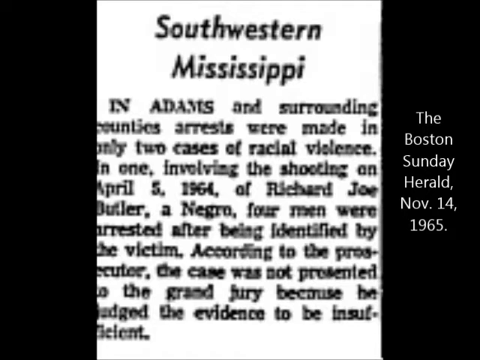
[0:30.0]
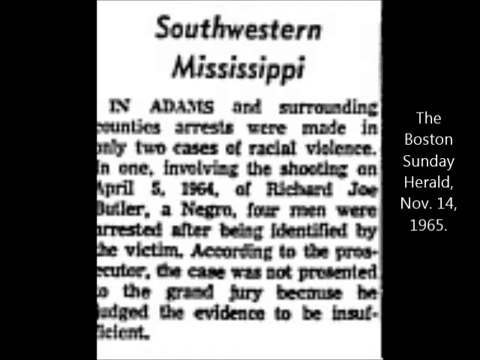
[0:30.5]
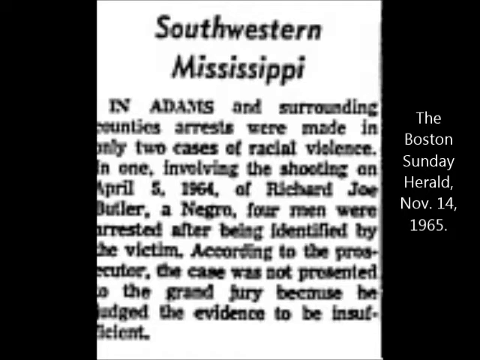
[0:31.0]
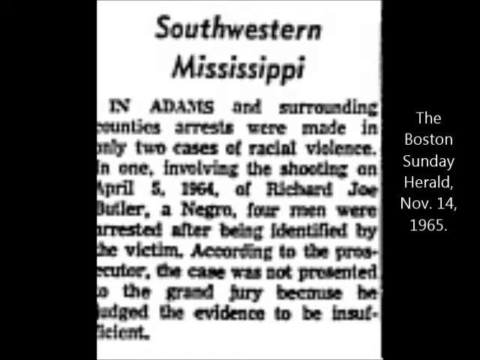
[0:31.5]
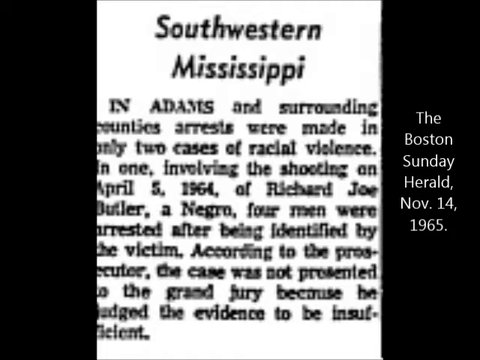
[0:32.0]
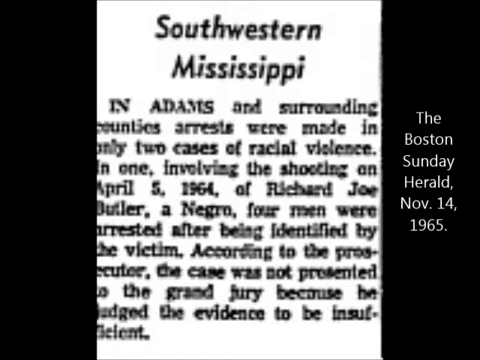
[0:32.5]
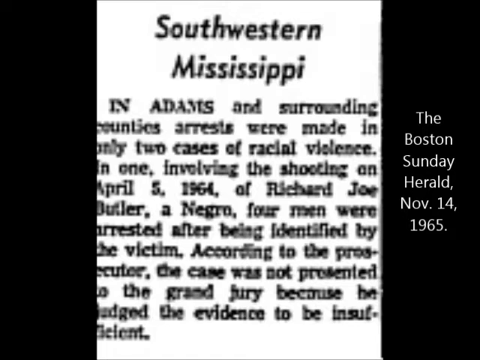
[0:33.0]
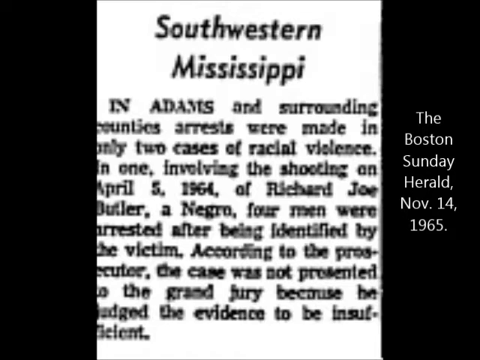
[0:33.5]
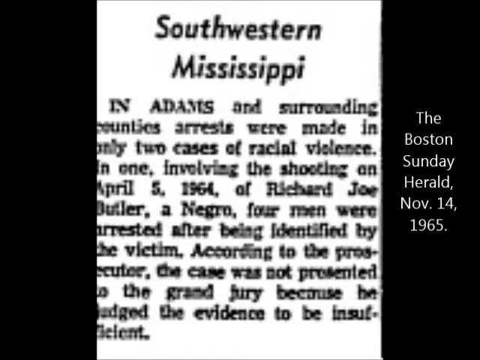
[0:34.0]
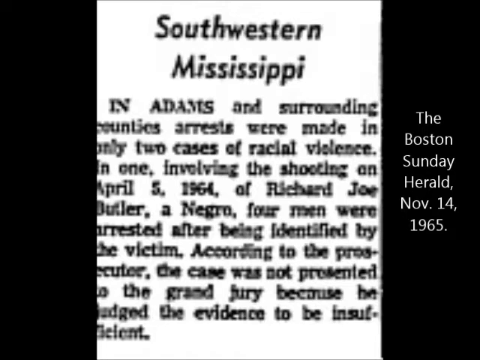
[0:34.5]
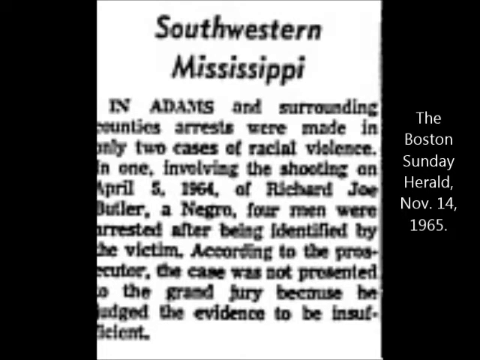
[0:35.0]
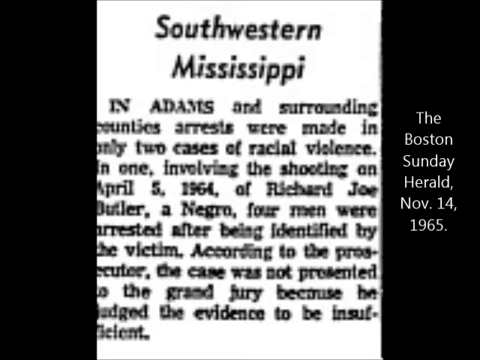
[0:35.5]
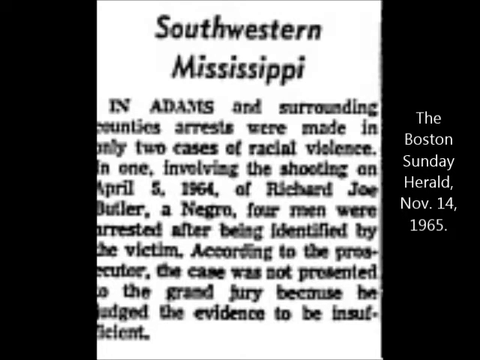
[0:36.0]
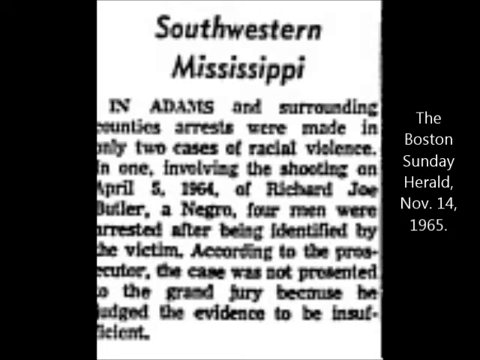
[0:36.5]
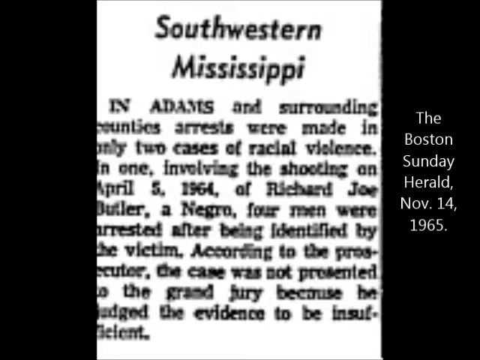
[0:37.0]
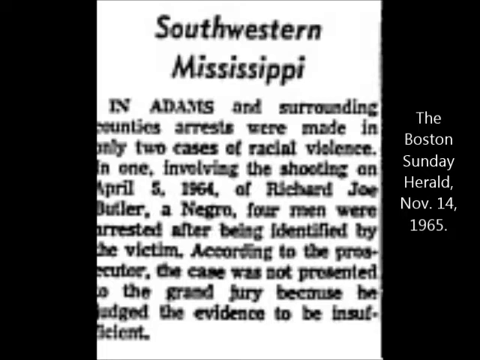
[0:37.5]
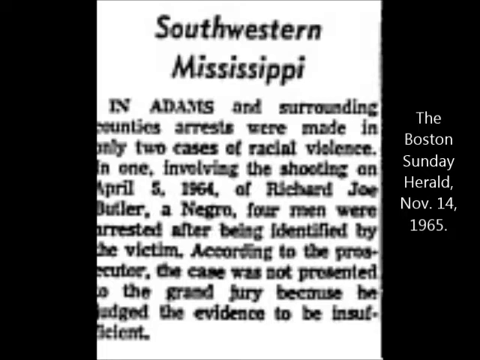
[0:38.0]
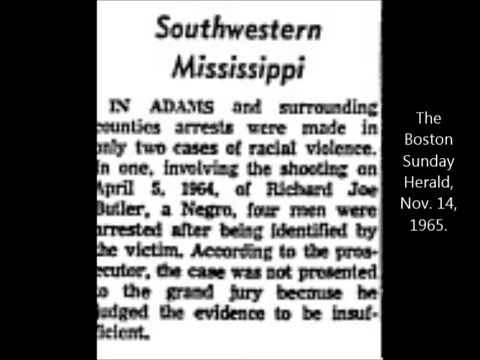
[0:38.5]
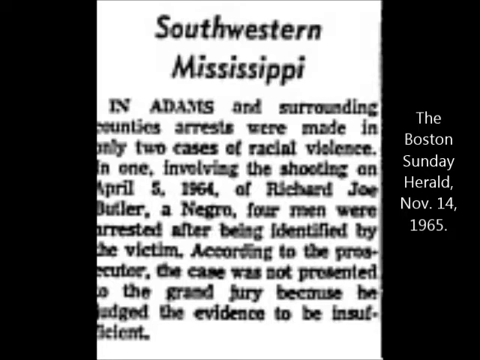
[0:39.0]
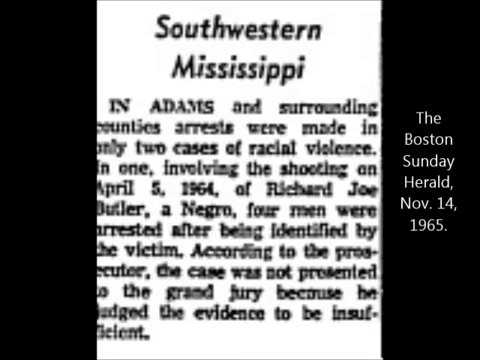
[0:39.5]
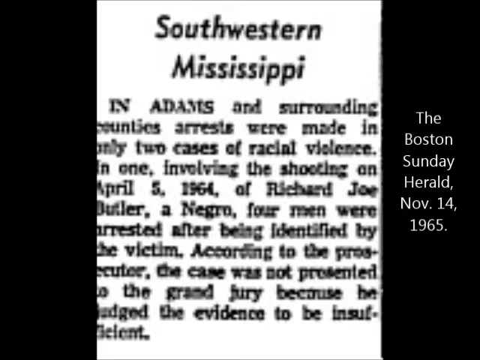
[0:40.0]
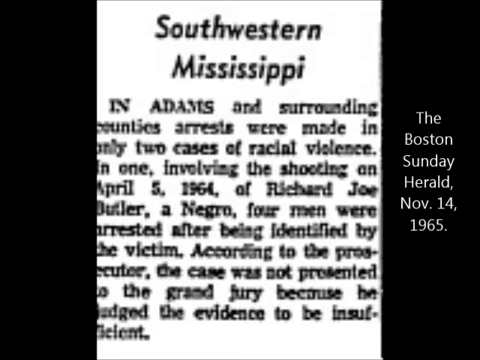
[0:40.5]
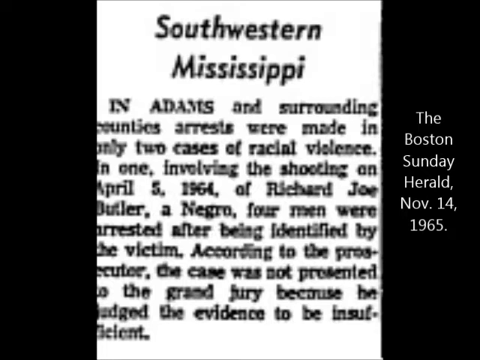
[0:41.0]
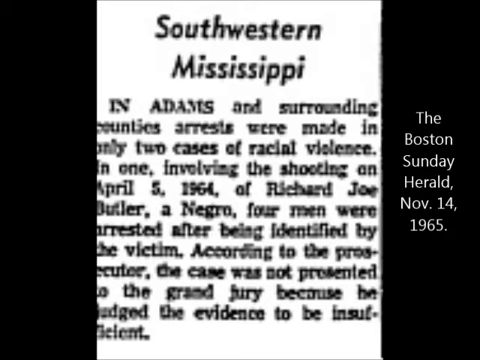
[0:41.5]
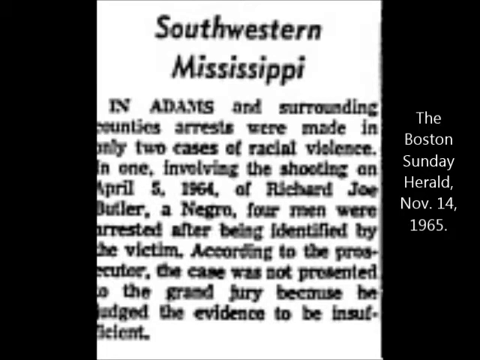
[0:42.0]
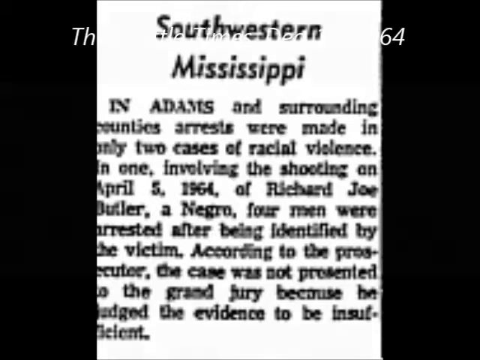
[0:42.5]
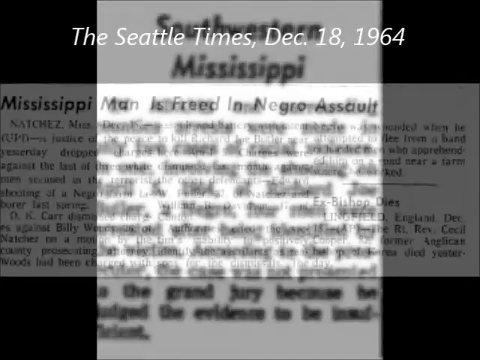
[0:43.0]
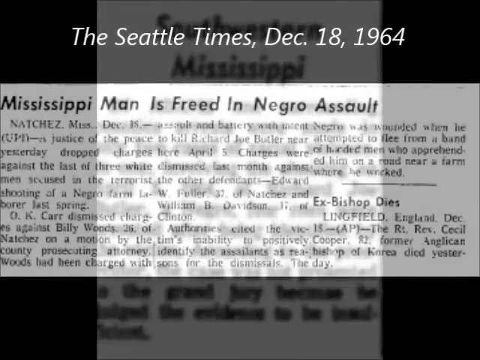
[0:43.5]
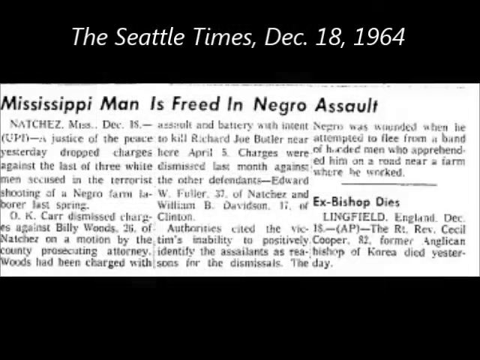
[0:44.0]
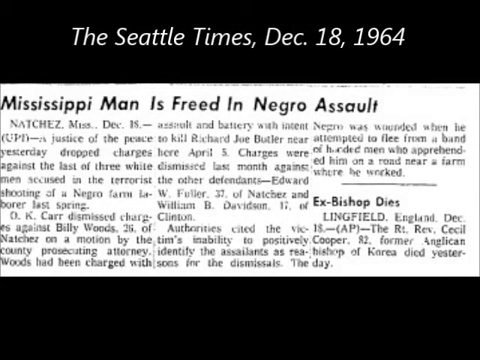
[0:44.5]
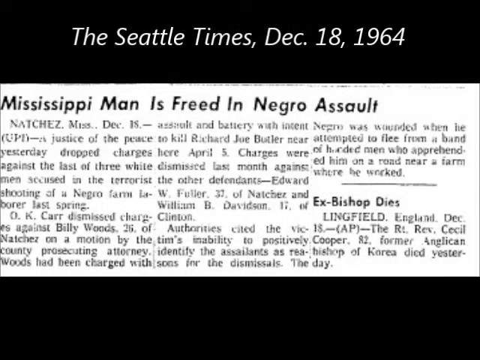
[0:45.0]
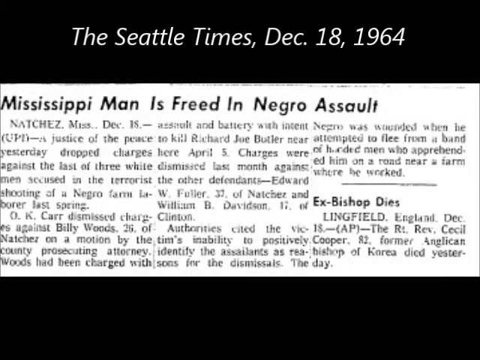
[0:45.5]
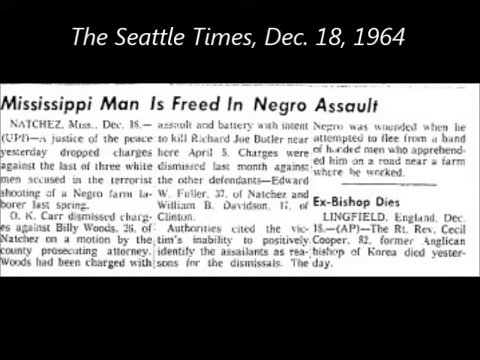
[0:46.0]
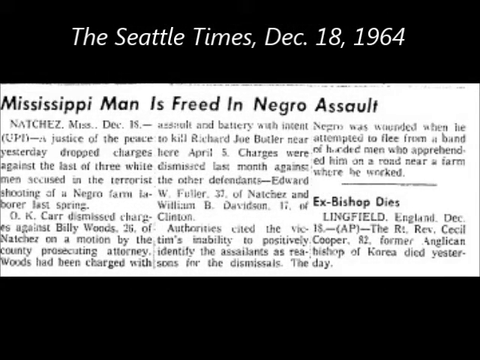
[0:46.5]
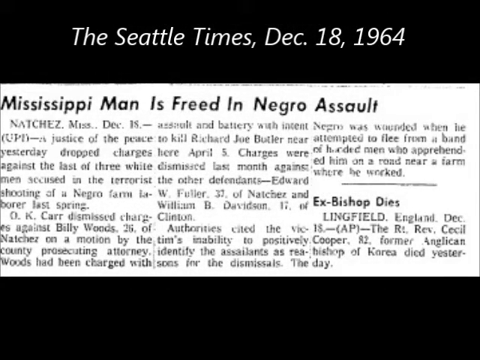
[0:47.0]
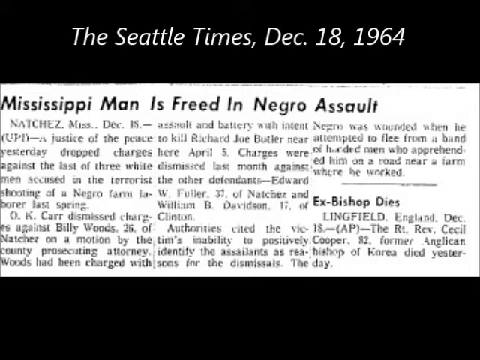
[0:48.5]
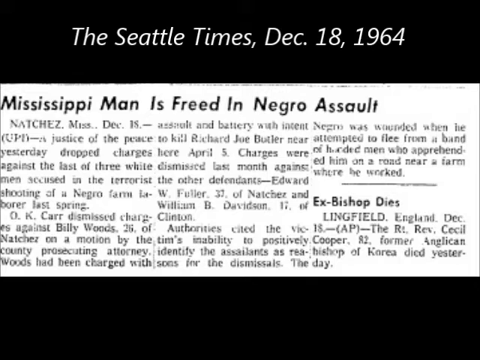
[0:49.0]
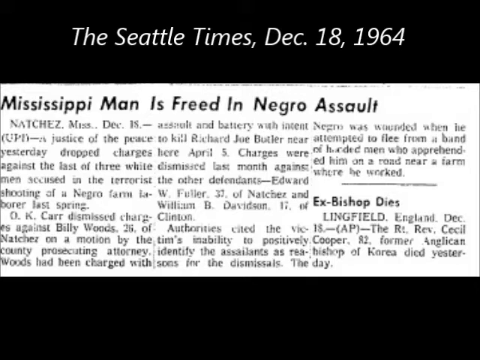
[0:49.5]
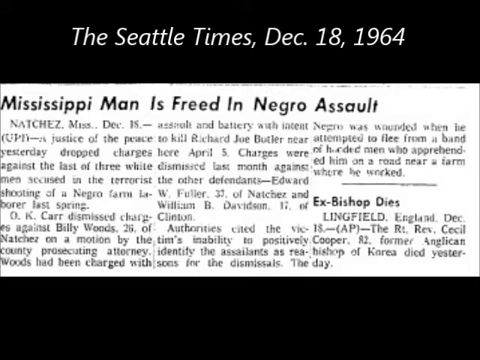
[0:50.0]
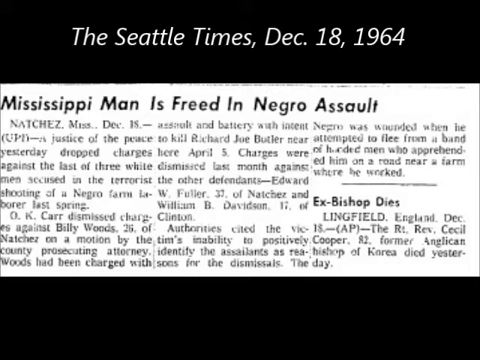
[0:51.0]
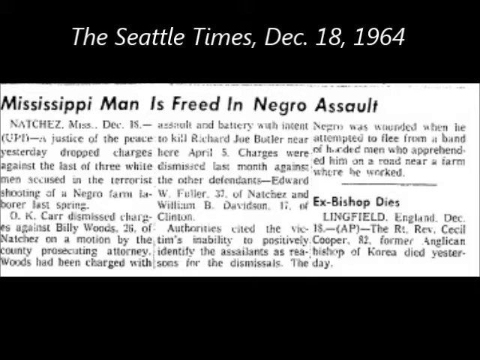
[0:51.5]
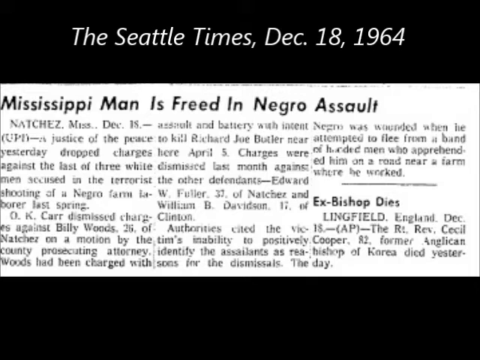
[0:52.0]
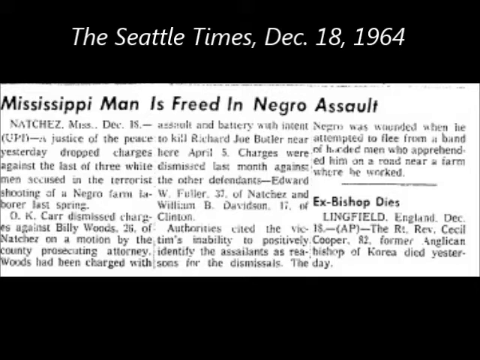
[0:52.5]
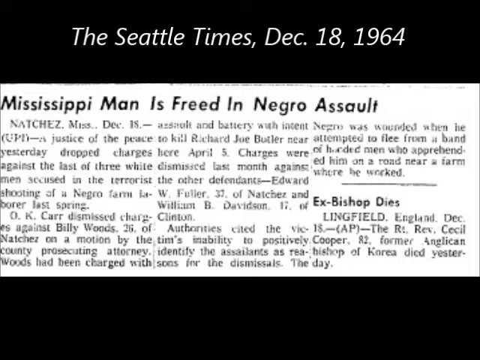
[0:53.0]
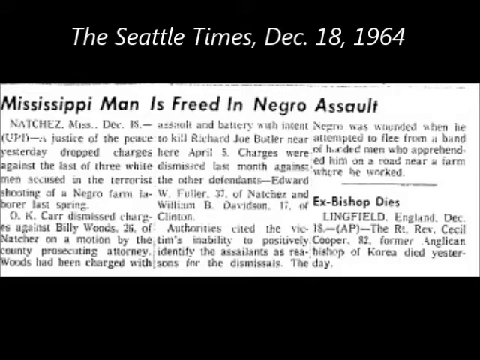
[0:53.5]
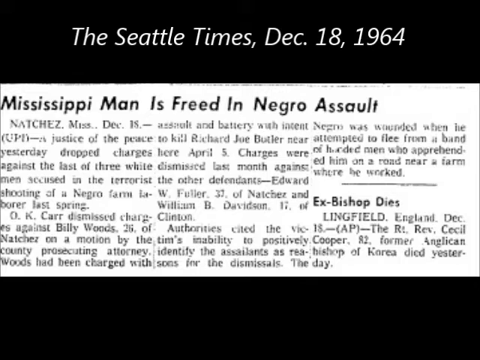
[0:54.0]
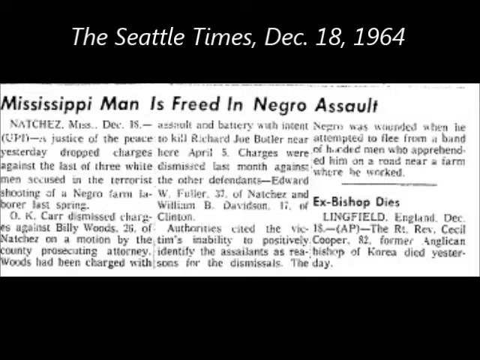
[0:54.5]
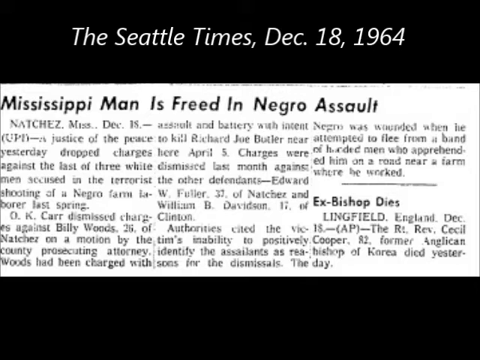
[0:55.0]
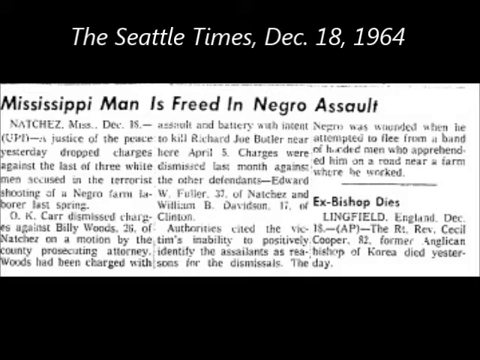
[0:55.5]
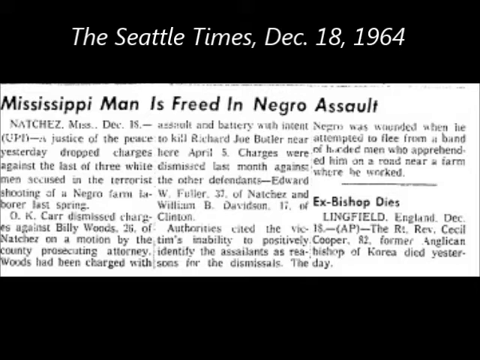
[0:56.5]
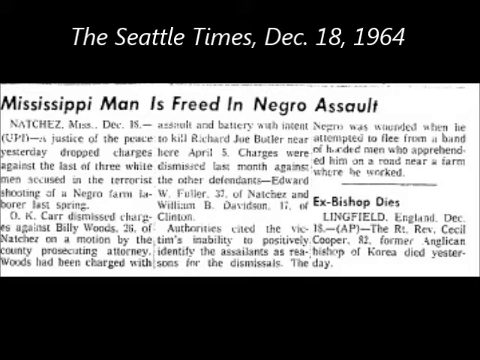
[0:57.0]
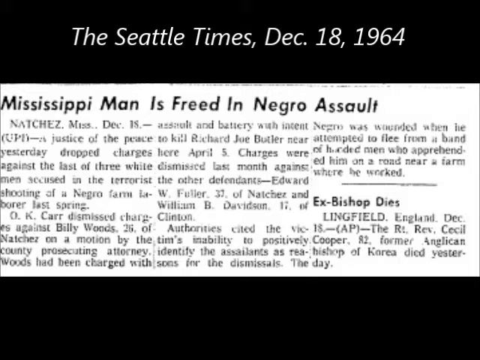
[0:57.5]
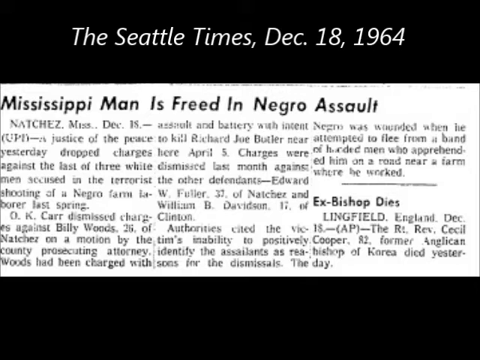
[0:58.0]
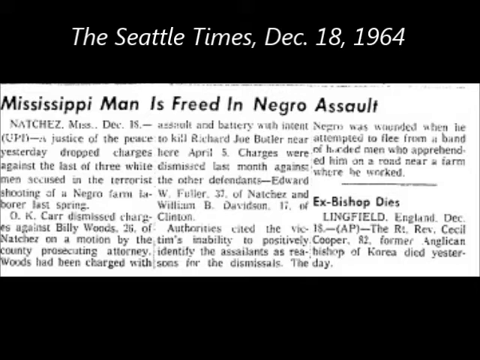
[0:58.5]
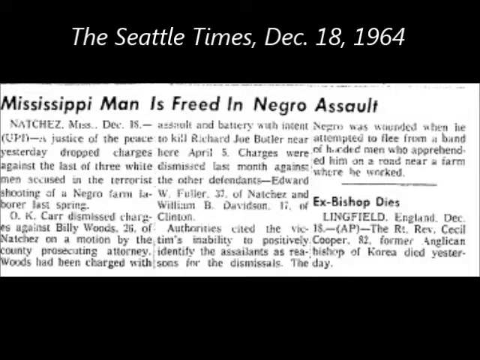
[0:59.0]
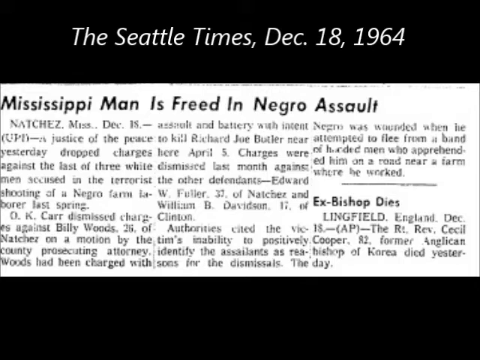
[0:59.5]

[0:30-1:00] The headline "Southwestern Mississippi" is shown on an old newspaper article from the Boston Sunday Herald, November 14, 1965. The article reads: "In Adams and surrounding counties, arrests were made in only two cases of racial violence. In one involving the shooting on April 5, 1964 of Richard Joe Butler, a Negro, four men were arrested after being identified by the victim. According to the prosecutor, the case was not presented to the grand jury because he judged the evidence to be insufficient." The words are a little blurry because the shot is a close-up of the old article. A second news article then appears, from the Seattle Times, December 18, 1964, set against a black background. Its title is "Mississippi man is freed in Negro assault," it shows that it is from Natchez, Mississippi, and the opening reads: "A justice of the peace yesterday dropped charges against the last of three white men accused in the terrorist shooting of a Negro farm laborer last spring."